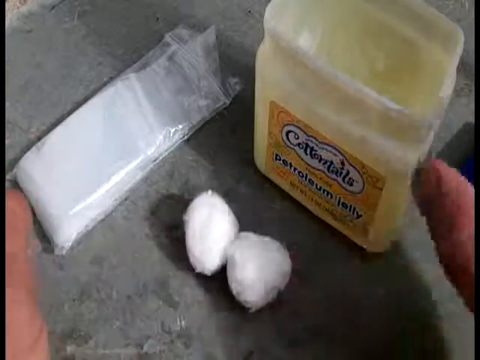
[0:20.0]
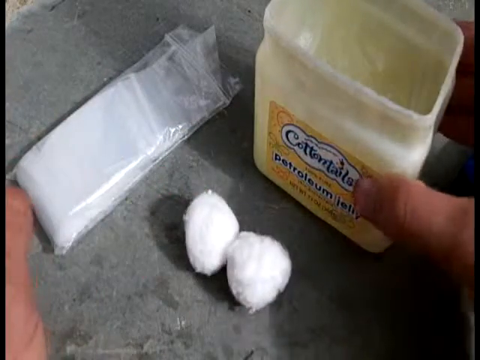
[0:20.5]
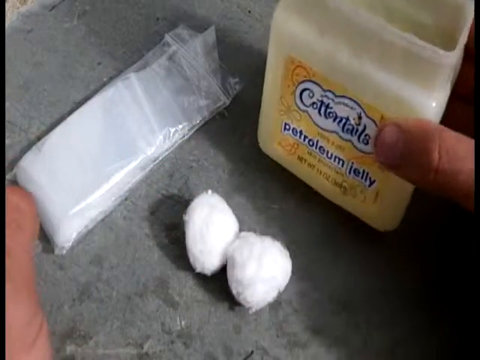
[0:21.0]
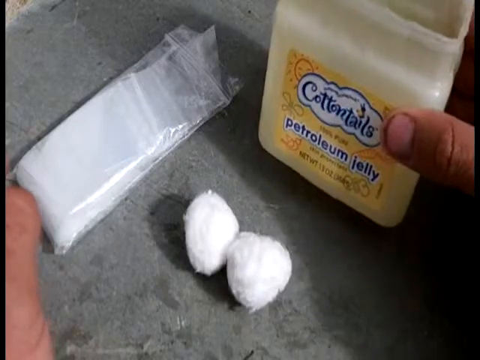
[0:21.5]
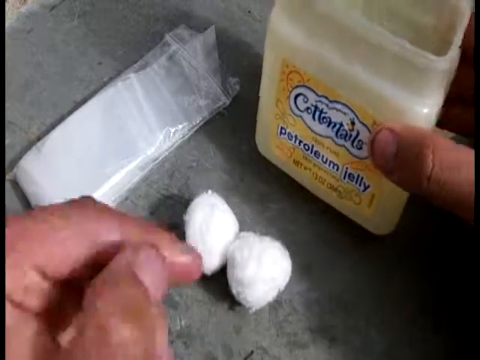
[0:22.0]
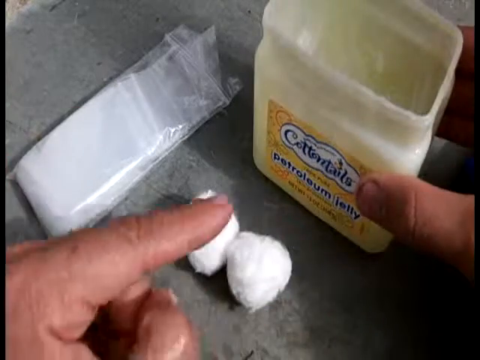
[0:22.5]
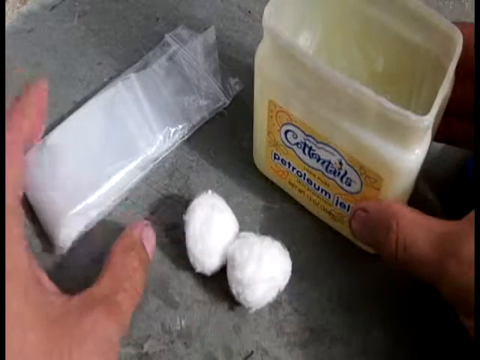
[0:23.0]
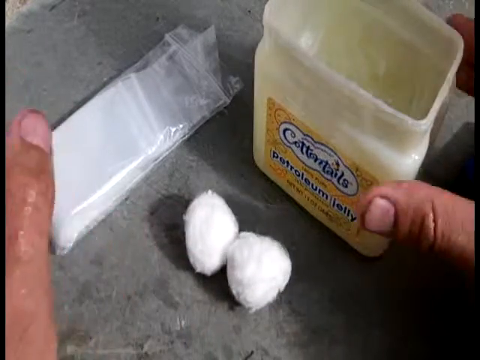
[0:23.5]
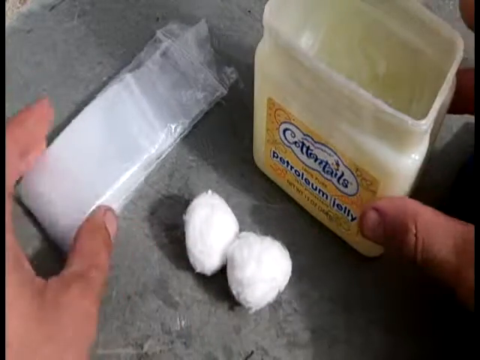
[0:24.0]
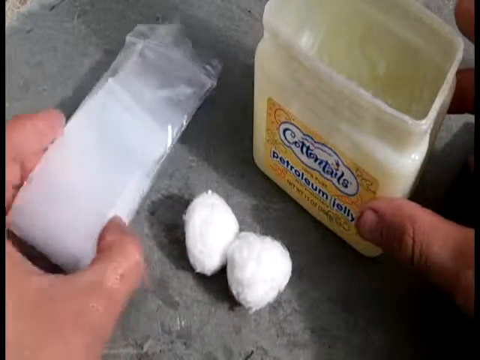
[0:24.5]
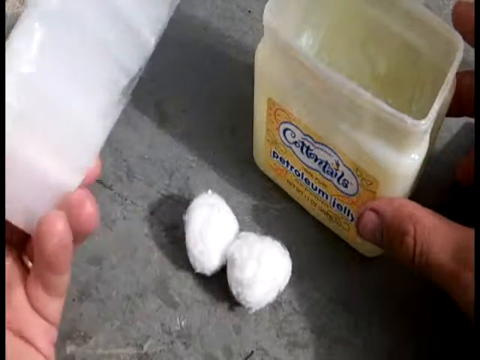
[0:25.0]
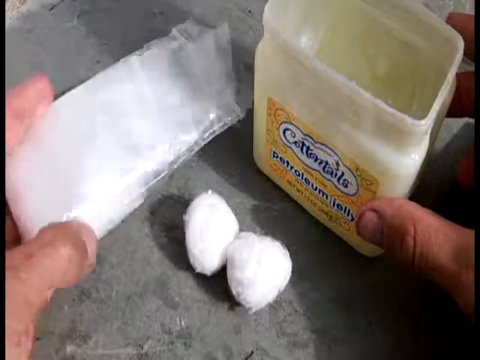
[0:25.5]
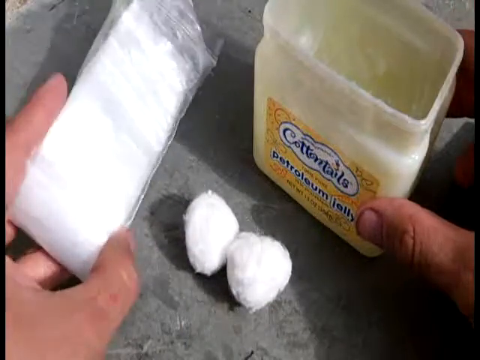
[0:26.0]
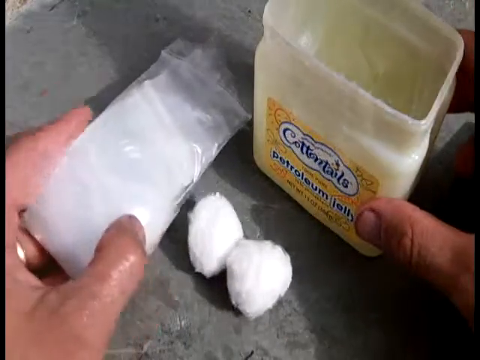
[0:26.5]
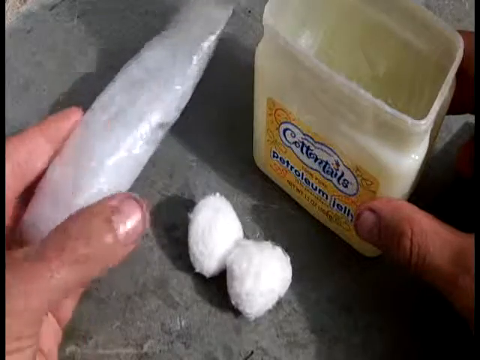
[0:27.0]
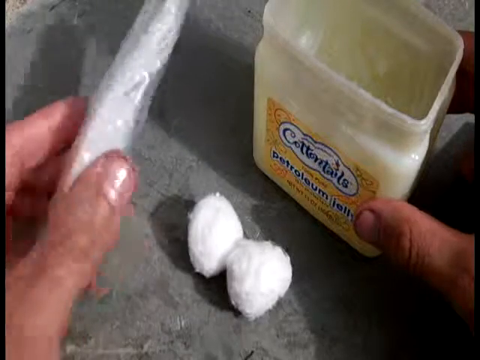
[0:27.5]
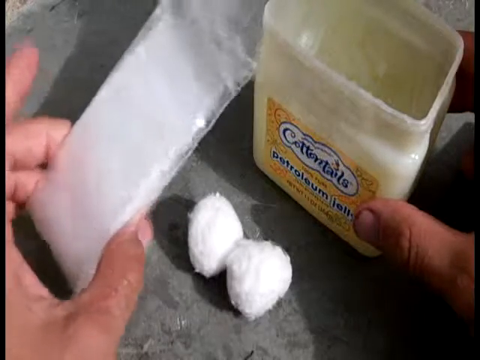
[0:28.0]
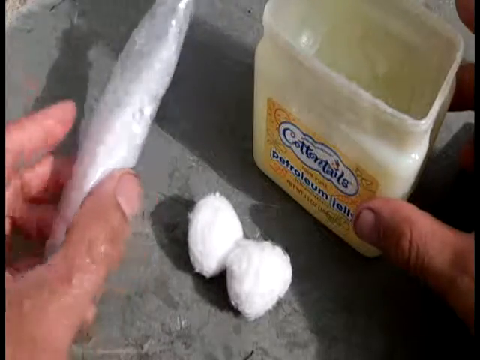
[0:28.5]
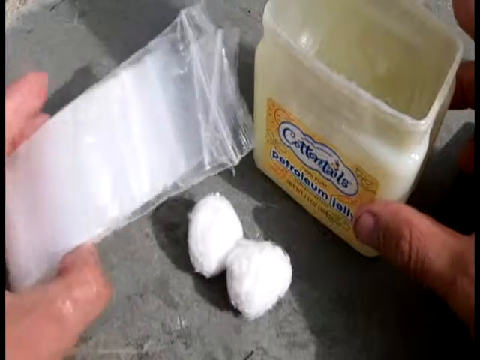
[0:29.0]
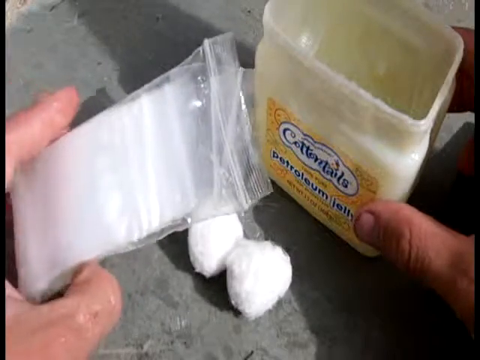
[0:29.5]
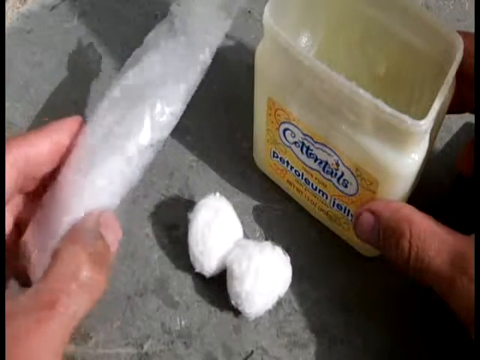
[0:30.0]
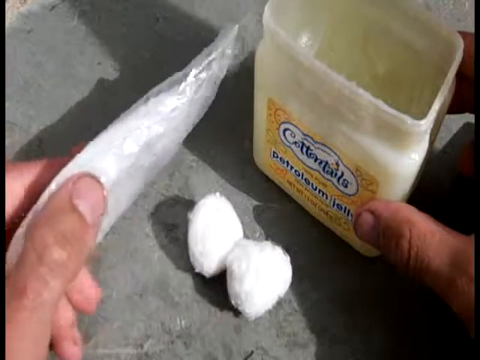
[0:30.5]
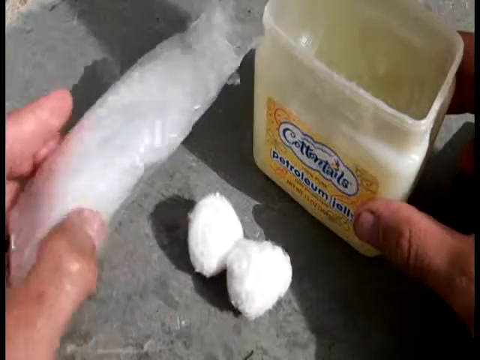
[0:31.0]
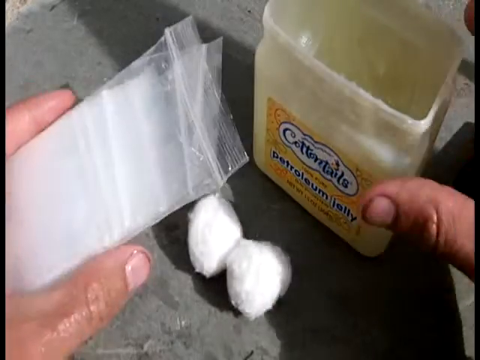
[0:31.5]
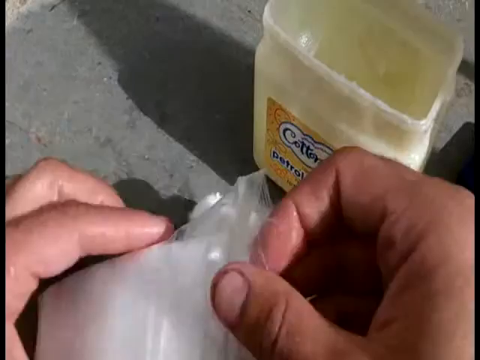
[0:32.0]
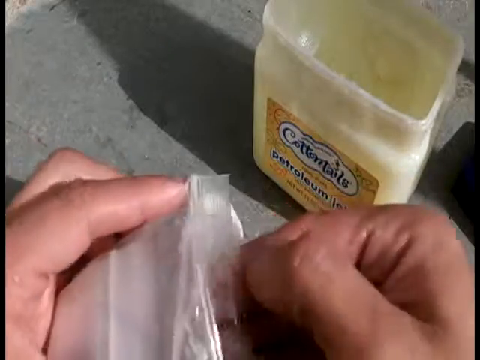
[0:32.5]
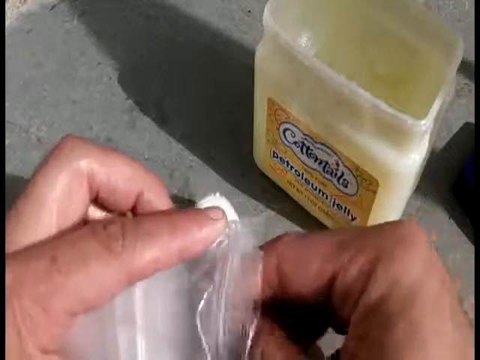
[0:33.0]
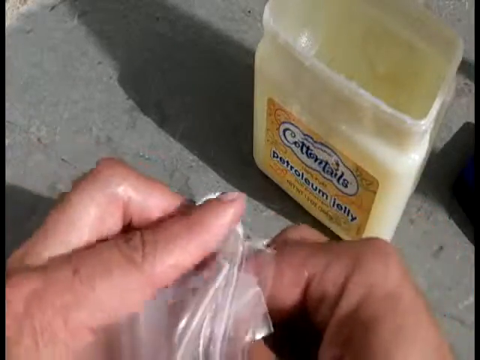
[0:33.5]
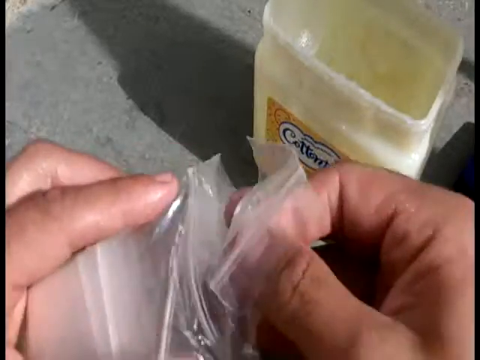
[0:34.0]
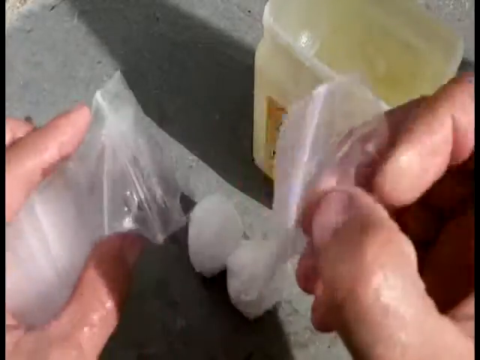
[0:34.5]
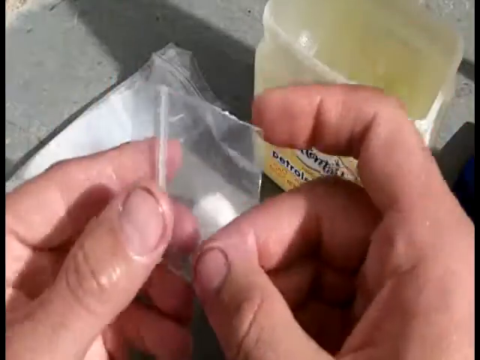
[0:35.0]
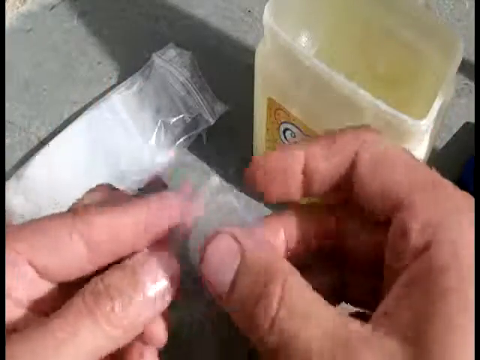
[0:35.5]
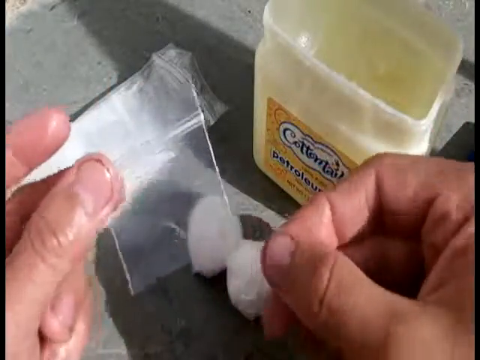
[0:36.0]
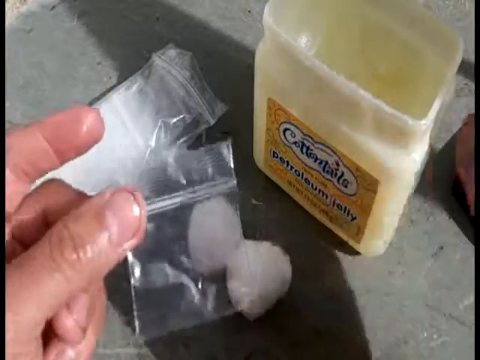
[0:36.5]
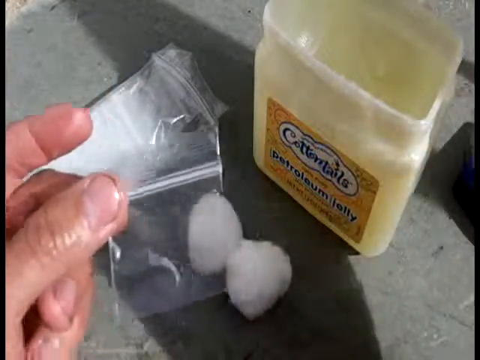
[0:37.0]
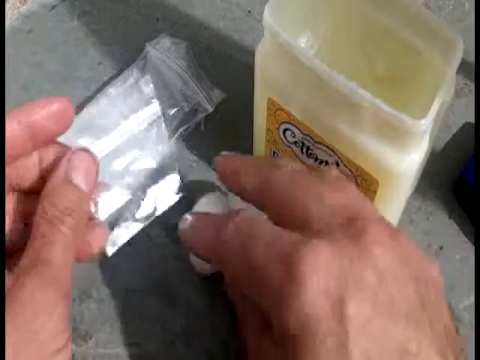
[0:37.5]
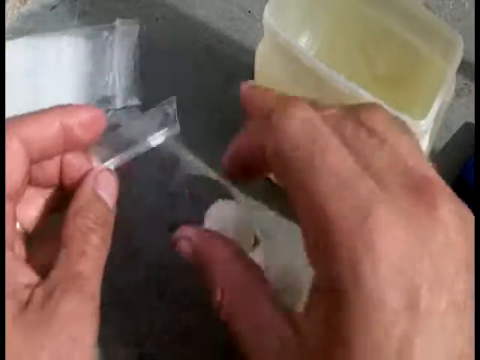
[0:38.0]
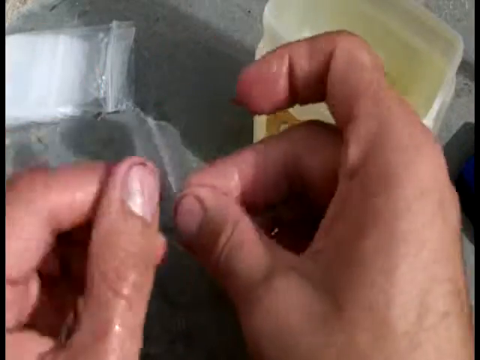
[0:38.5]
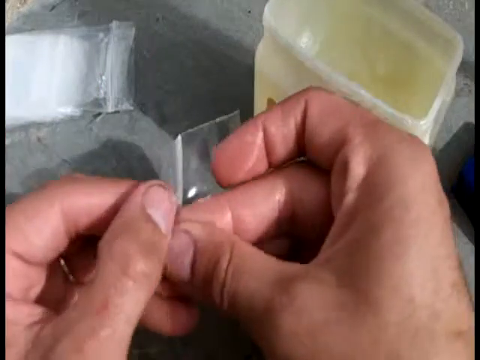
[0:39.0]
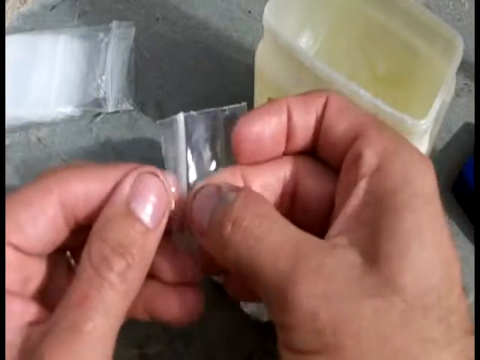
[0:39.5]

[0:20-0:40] In a close-up of a gray tabletop, a container of light yellow petroleum jelly with its lid off is toward the top right of the screen, with a label on the front that says "Cotton Tails Petroleum Jelly." In front of the jar are two white cotton balls, and toward the top left is a tall, narrow, clear Ziploc bag that looks like it has many other Ziploc bags inside. A pair of hands is at the bottom of the screen. The right hand lifts the petroleum jelly up a bit, sort of examining the label before putting it back down. The hands then point to the cotton balls with the left index finger, pick up the Ziploc bag with the left hand, and turn it to the side and back to the front, examining it a bit. They pull out a small Ziploc bag from right at the top of the larger bag; it looks to be about an inch big. The hands begin to open this bag, separating the zip at the top.